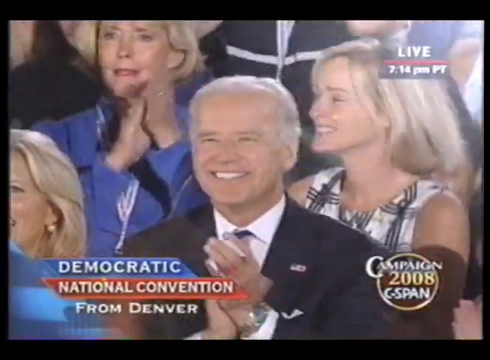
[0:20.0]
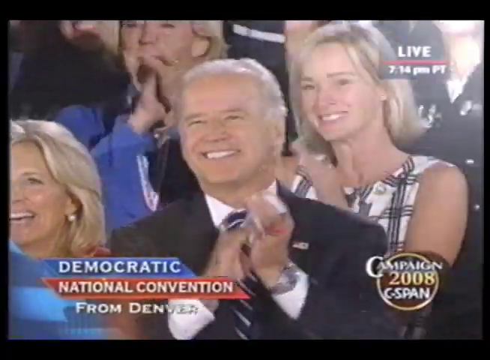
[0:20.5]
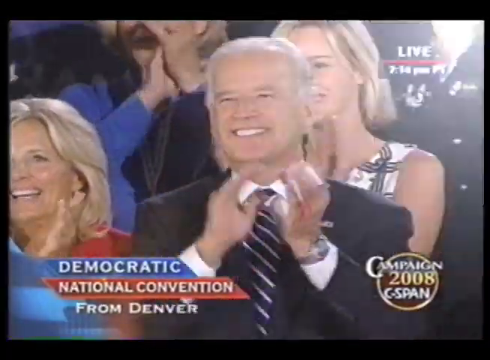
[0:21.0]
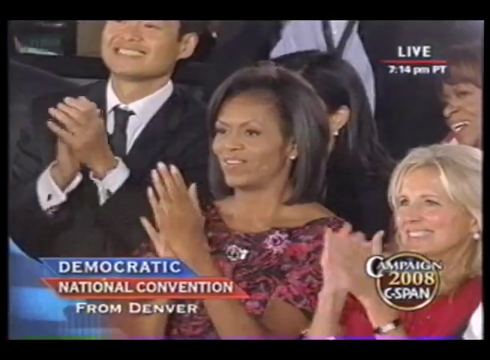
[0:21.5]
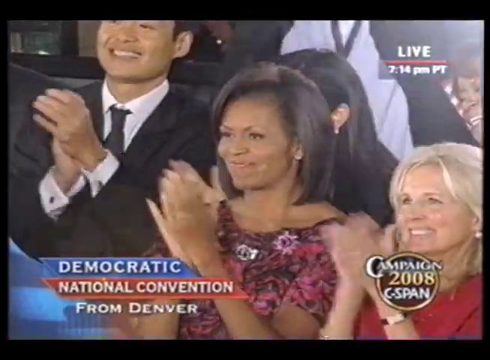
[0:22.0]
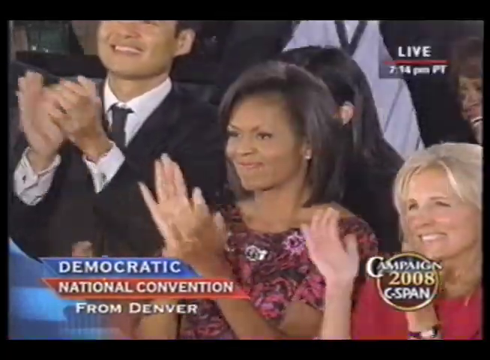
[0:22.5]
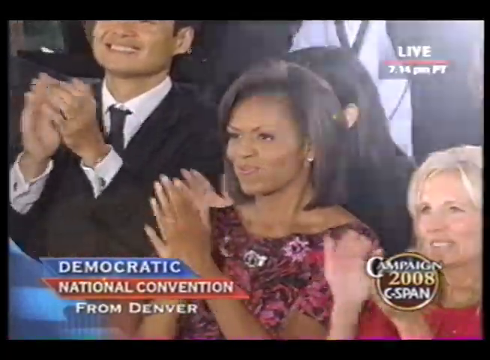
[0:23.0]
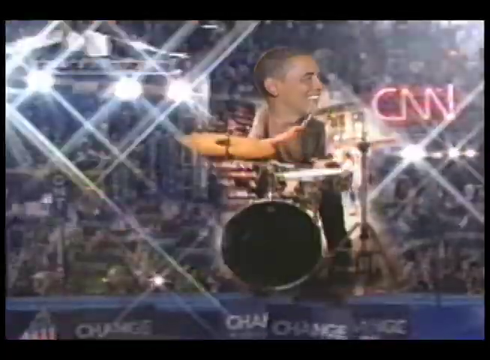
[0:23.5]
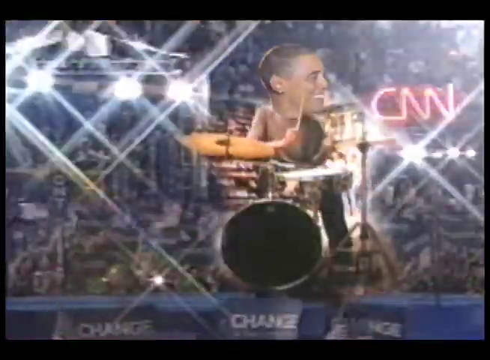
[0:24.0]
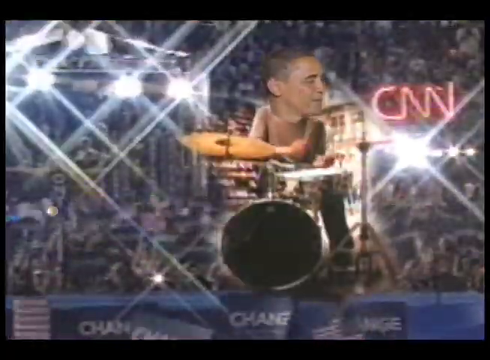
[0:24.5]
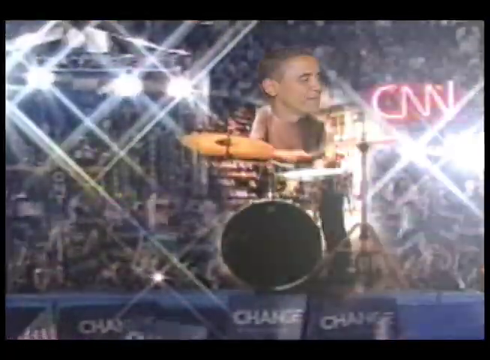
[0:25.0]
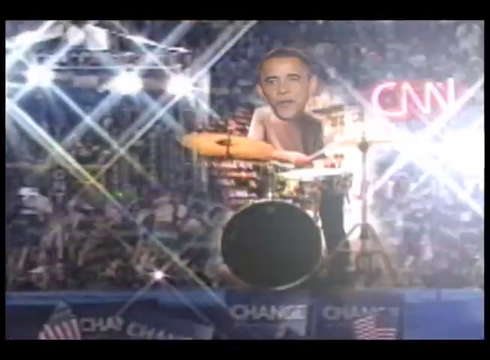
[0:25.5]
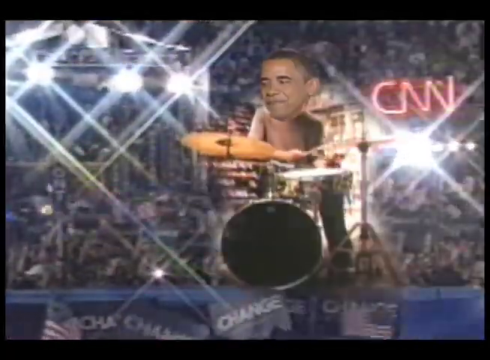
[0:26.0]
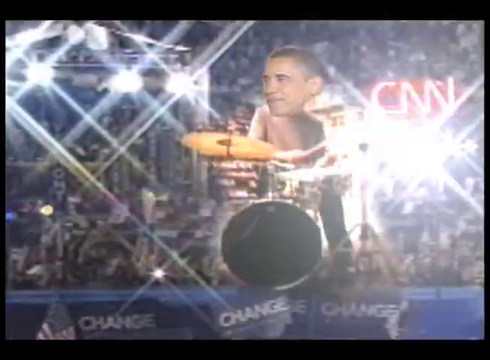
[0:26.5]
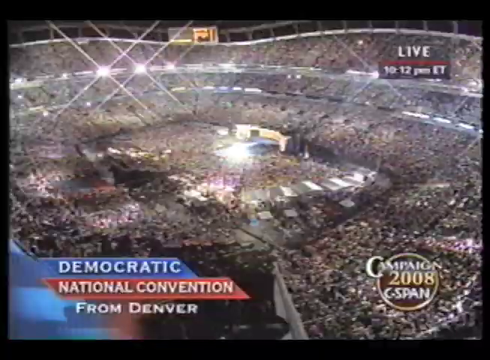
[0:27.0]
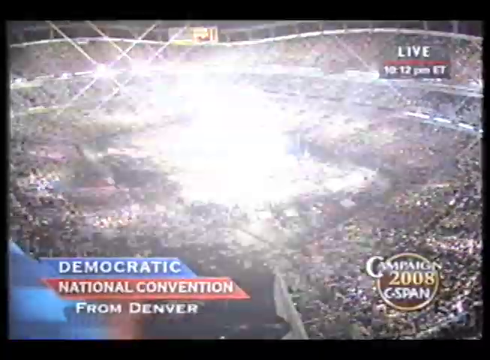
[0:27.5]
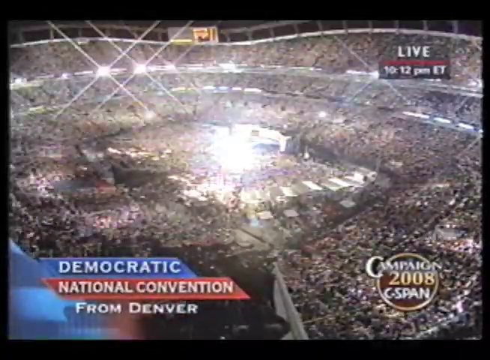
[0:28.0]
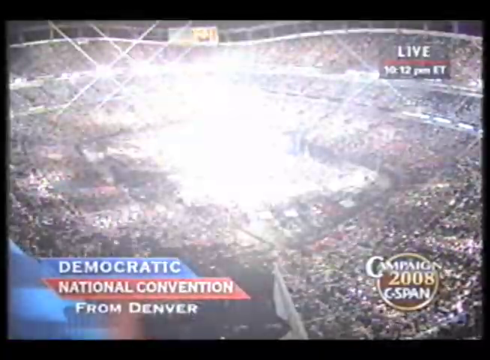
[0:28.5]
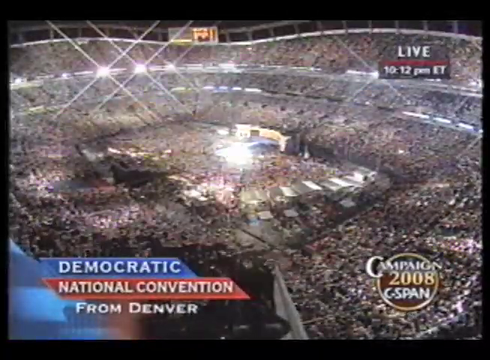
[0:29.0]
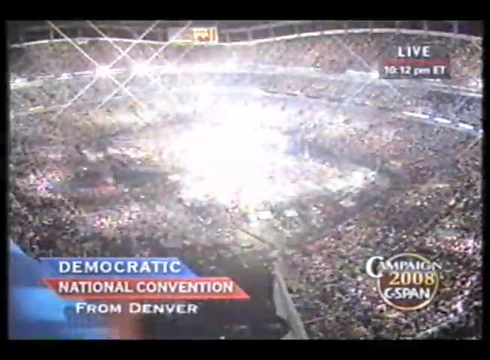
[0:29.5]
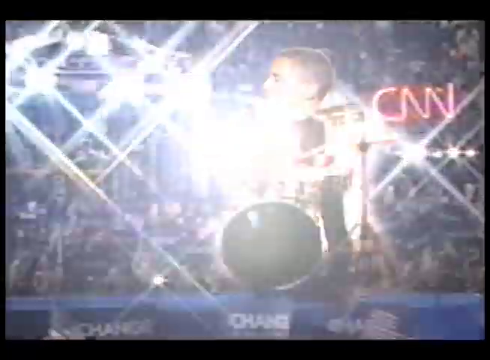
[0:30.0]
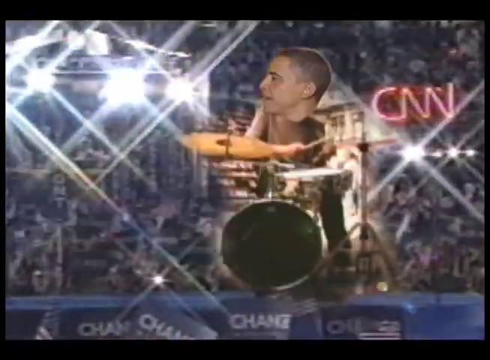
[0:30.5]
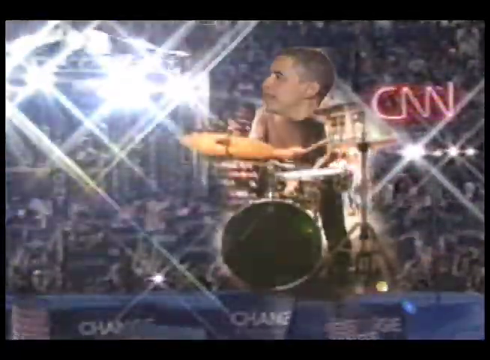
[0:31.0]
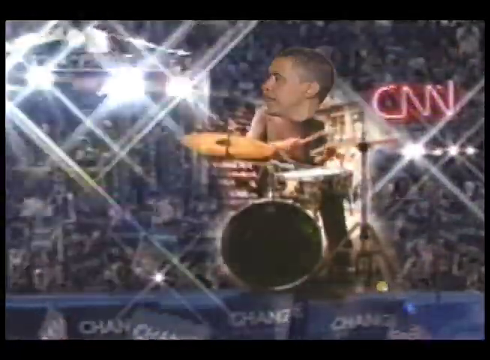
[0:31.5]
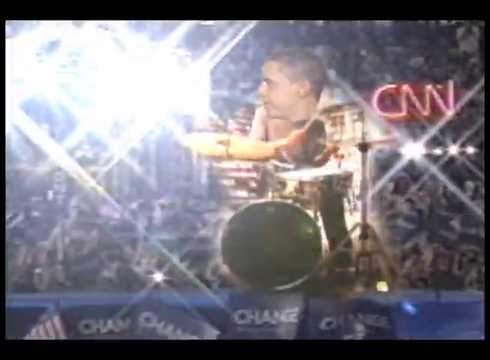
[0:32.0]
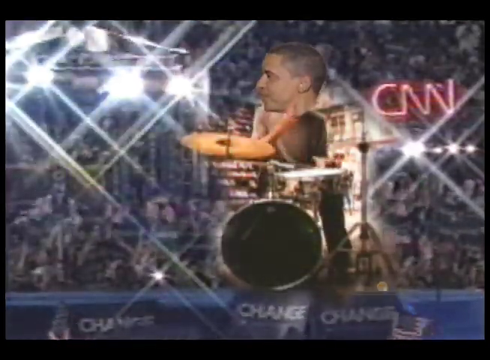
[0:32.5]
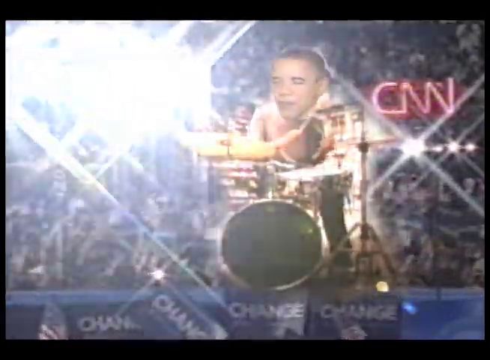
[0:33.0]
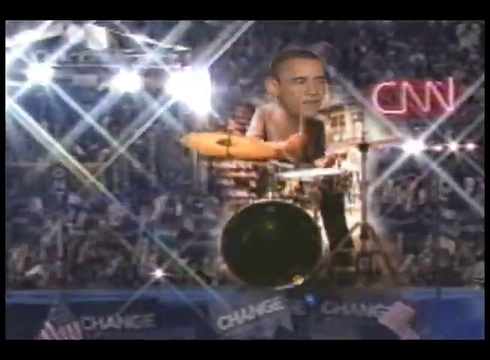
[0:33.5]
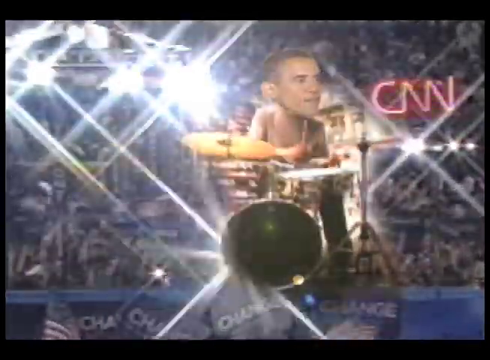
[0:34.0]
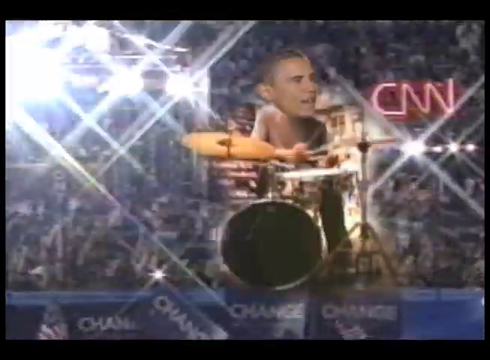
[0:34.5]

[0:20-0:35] Obama's head is superimposed over a drummer, presented as if he were playing drums in a concert-like setting at the Democratic National Convention. There is a large crowd, bright lights, people waving flags and a neon CNN sign in the background. The video then cuts to various clips of Obama speaking and John McCain speaking, apparently on talk shows and similar settings, holding microphones. It cuts to kind of an old-fashioned clip, then to Joe Biden at a debate. Between these clips are old-fashioned, black-and-white movie-type snippets, including a man breaking a record in half; he is also holding a record. The video keeps cutting back and forth between the convention footage and these old-fashioned record clips. There are also soul and R&B snippets, apparently of bands playing, and a black-and-white crowd burning and throwing garbage. The clips mostly follow a theme of records, record players and people breaking records, cutting back to the drumming Obama. Michelle Obama is sometimes shown clapping along and saying "yes, we can." Other politicians, such as Sarah Palin, also appear in the back-and-forth.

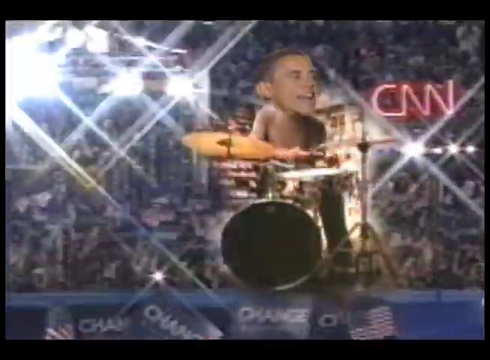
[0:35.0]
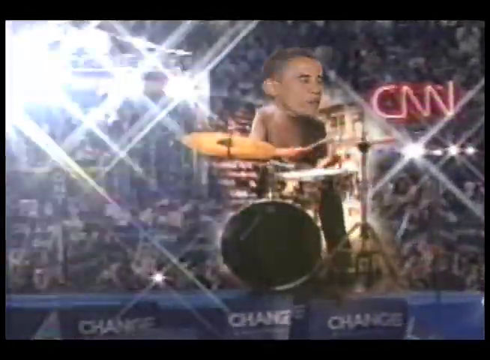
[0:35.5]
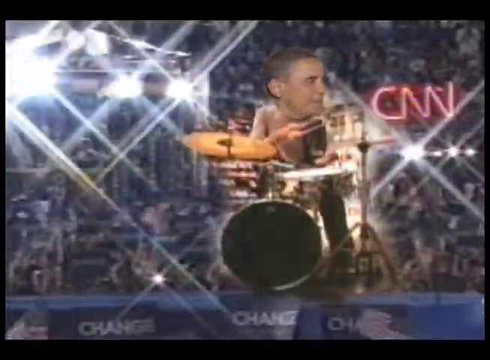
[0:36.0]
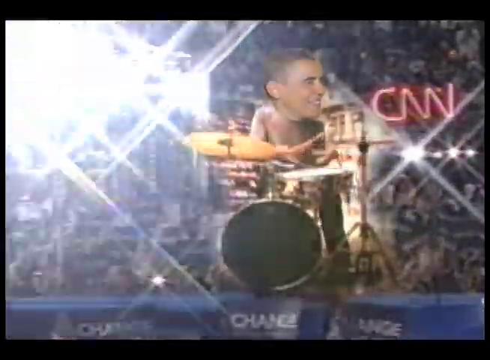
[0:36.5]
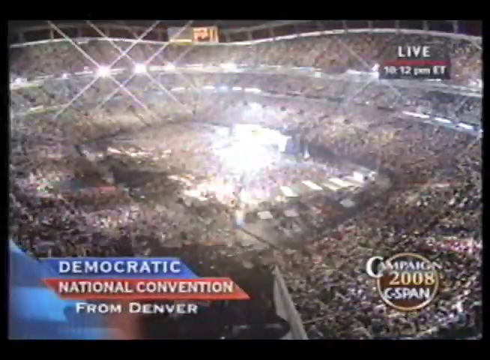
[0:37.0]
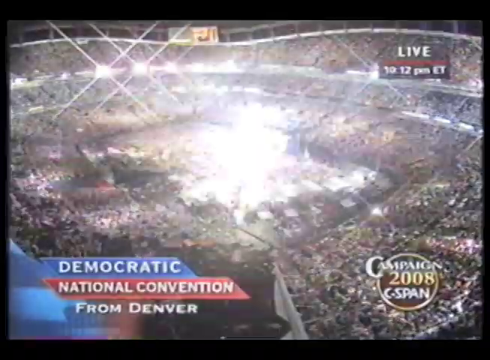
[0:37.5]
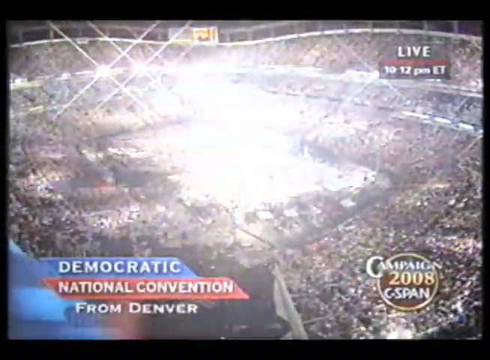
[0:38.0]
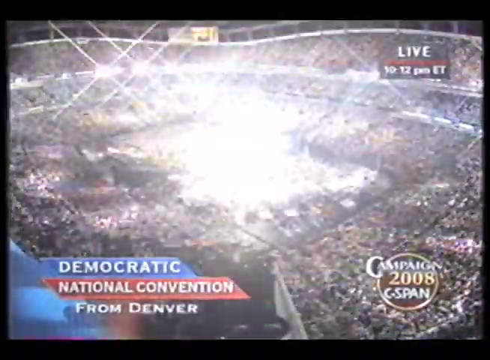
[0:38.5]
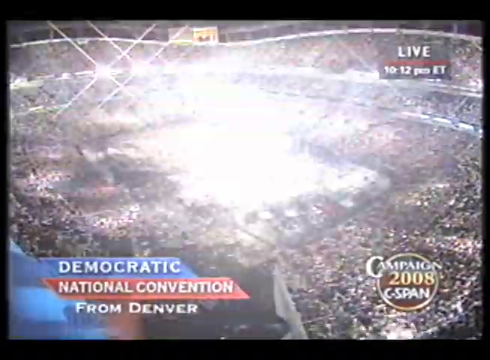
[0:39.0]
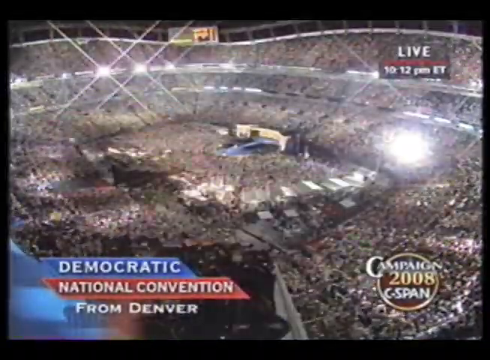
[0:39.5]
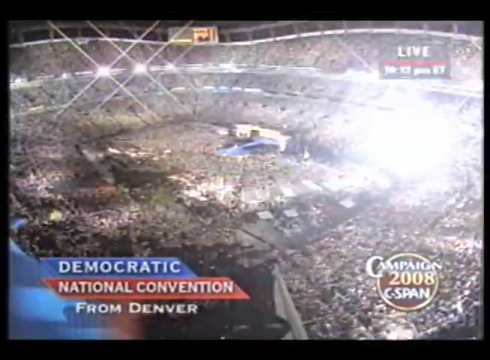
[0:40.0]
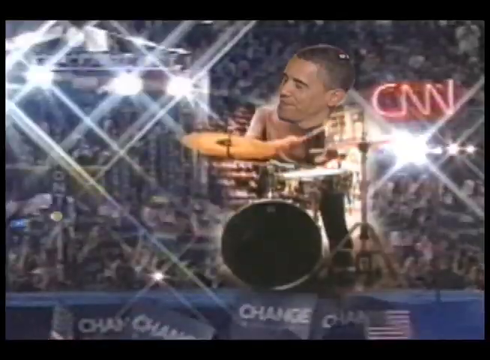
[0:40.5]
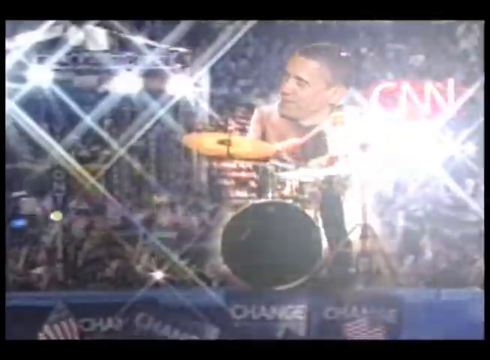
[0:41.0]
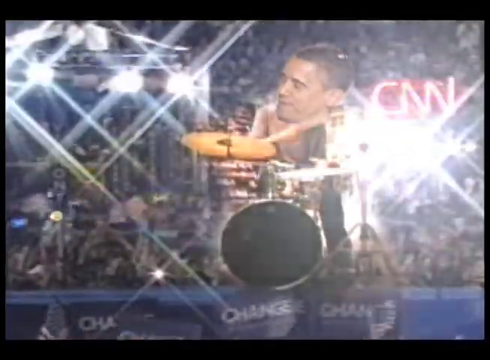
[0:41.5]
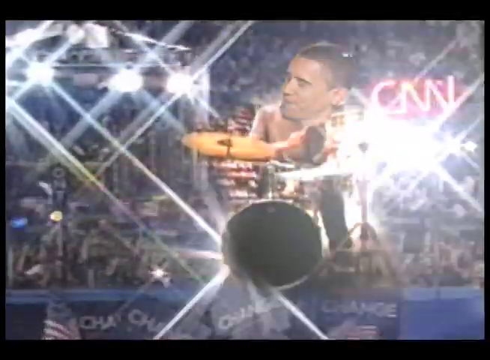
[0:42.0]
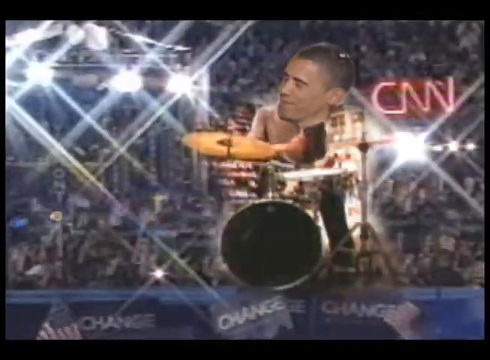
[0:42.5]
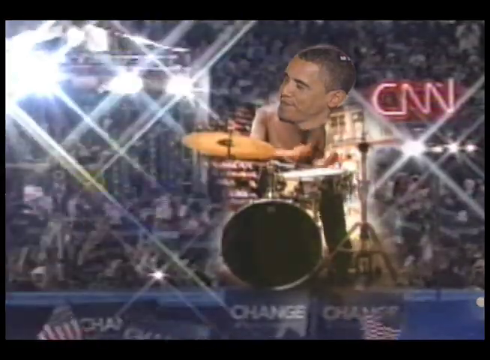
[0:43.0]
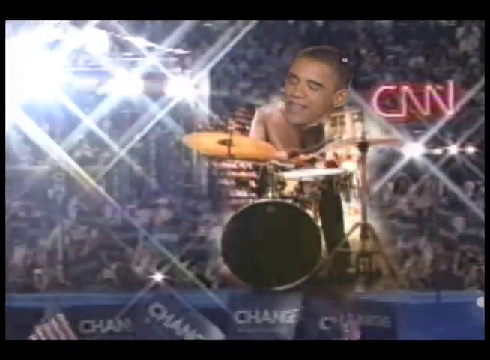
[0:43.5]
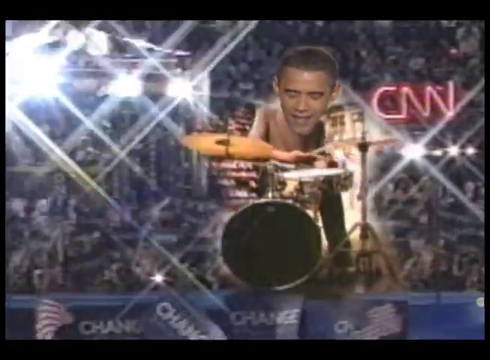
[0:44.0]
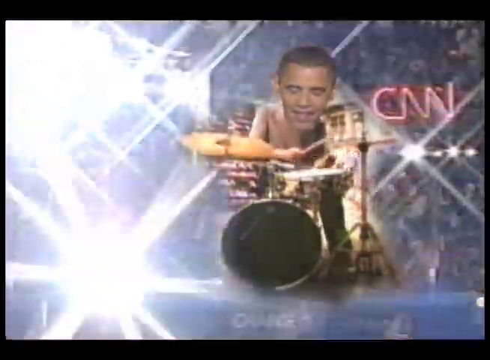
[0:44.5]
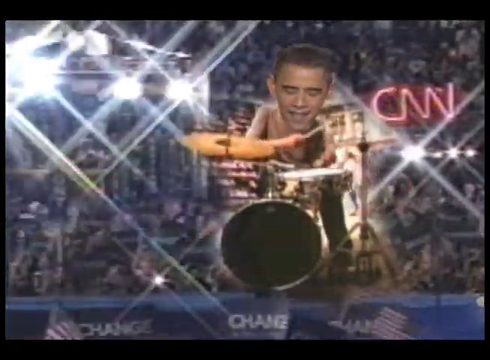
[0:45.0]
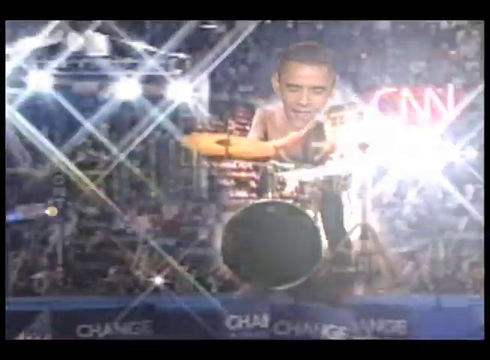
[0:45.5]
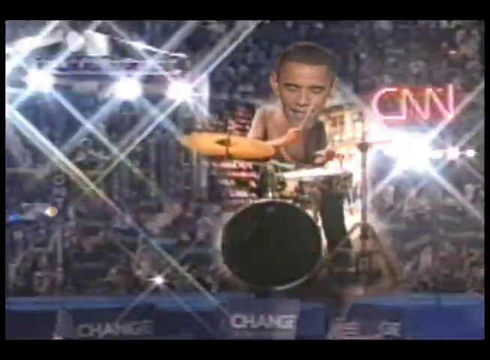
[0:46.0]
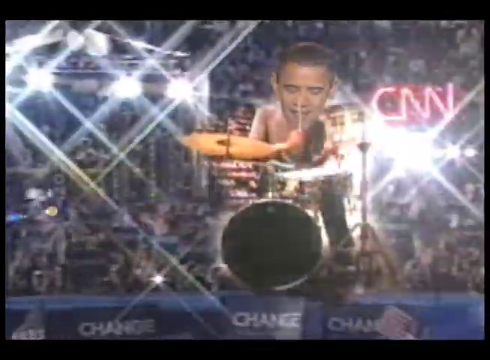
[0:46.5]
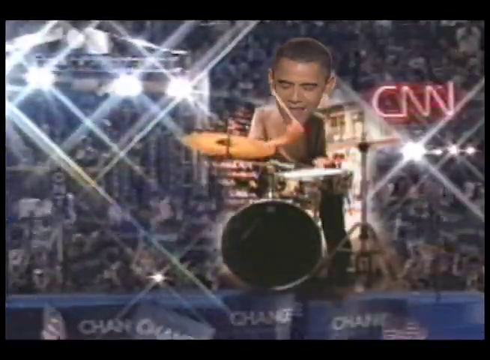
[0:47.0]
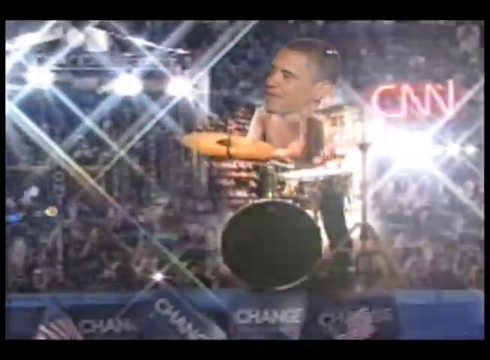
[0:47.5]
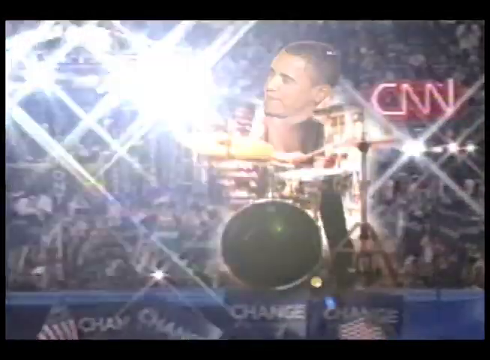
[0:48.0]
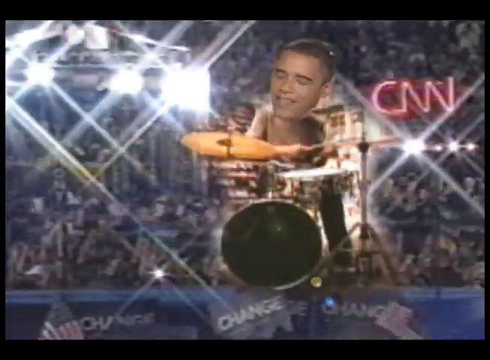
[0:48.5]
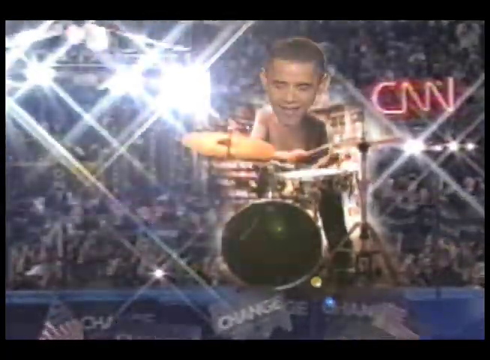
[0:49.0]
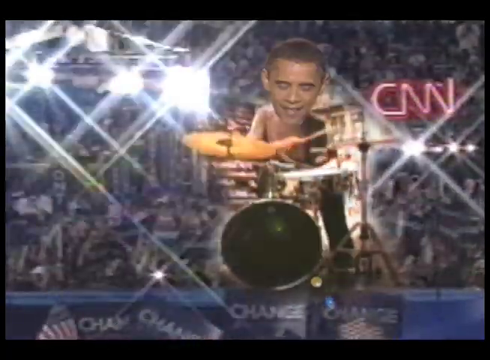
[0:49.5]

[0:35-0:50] Obama's head is superimposed over a drummer's body, a large head, as if he were performing on stage at the Democratic National Convention. A large crowd waves flags, there are bright lights, and a neon CNN sign is in the right corner. The view pans out to the large stadium showing the whole crowd, with text that says "Democratic National Convention, Denver." Beneath the stage where Obama is, signs that say "change" are held up. "Campaign 2008" appears in the lower right corner, and "live" appears in the upper right. People wave the flags excitedly. The clip is kind of comical.